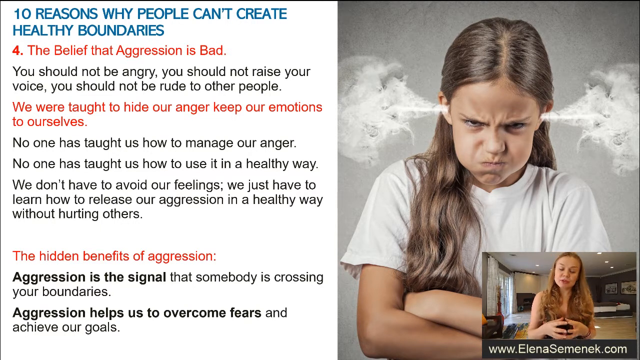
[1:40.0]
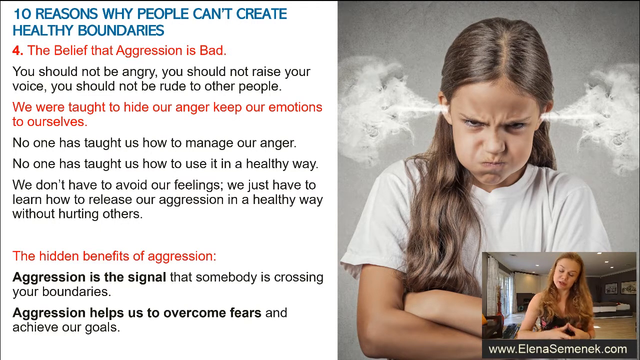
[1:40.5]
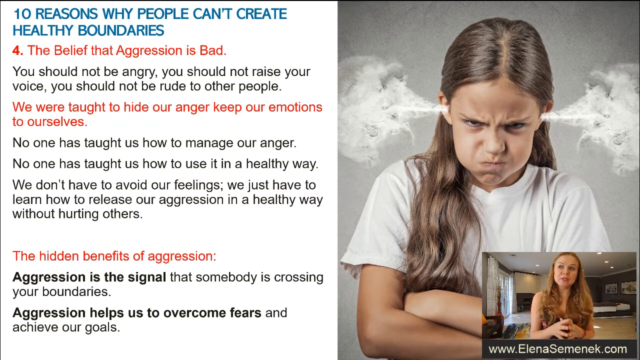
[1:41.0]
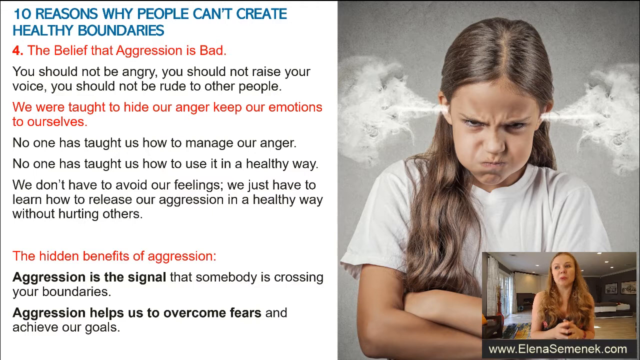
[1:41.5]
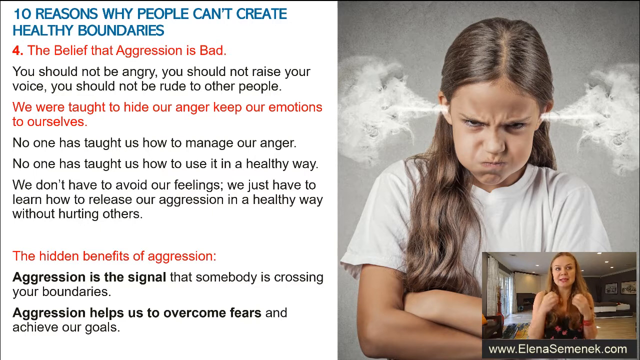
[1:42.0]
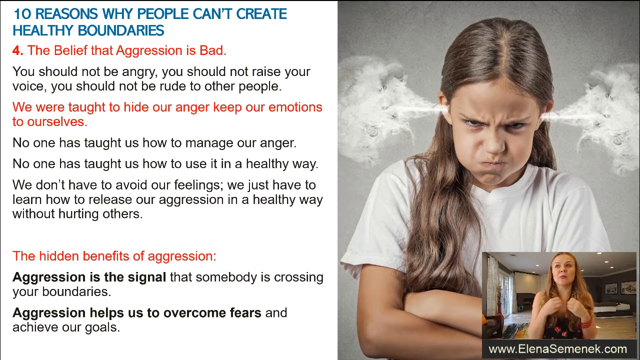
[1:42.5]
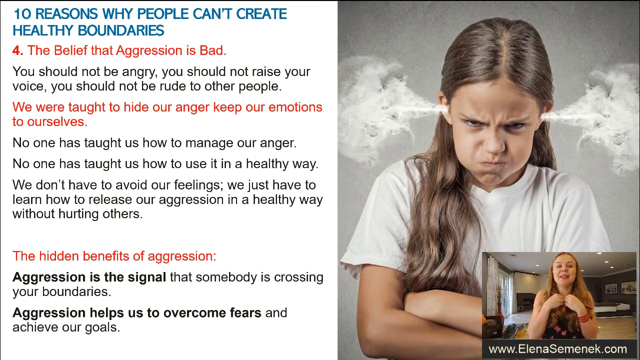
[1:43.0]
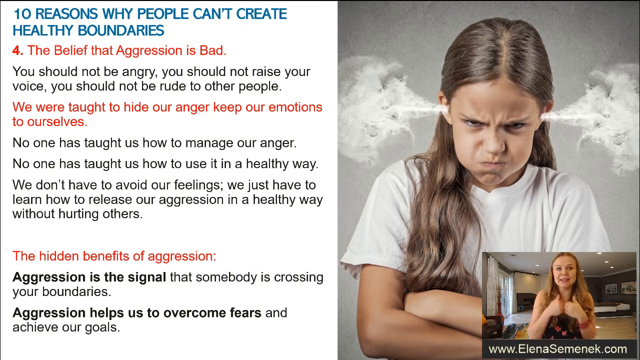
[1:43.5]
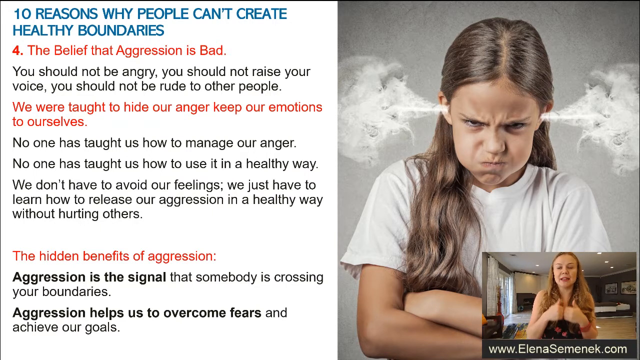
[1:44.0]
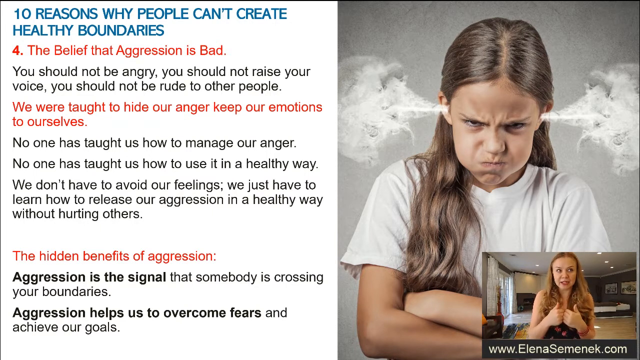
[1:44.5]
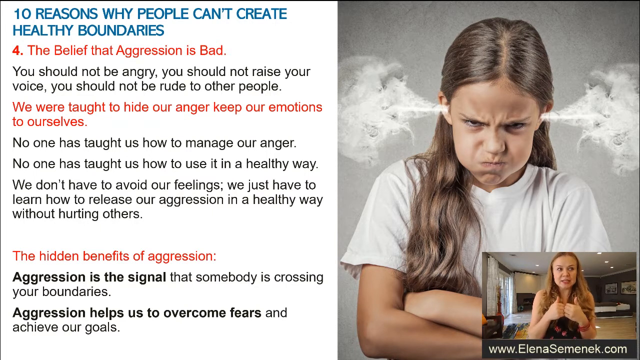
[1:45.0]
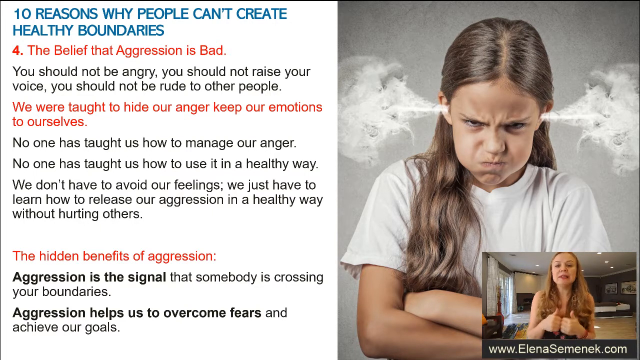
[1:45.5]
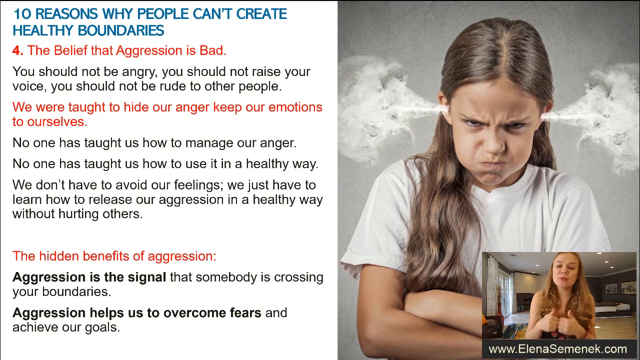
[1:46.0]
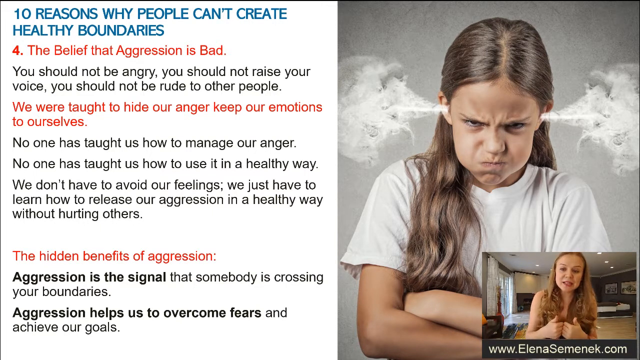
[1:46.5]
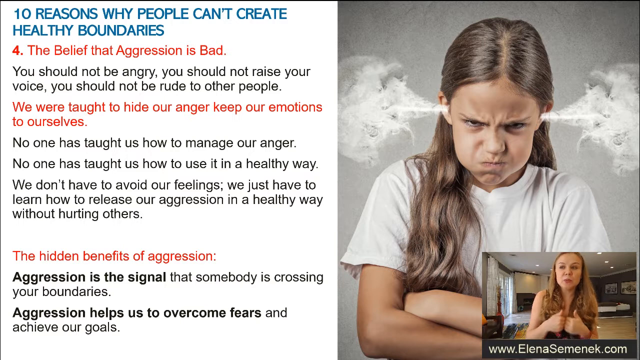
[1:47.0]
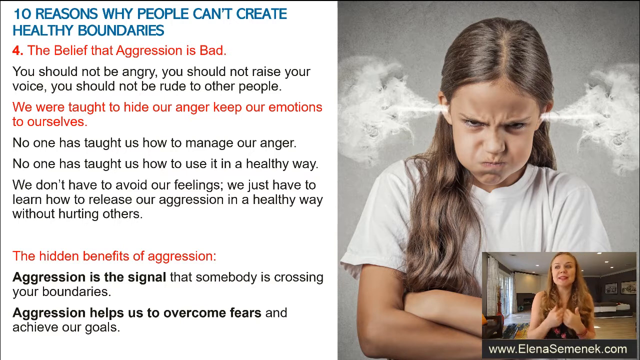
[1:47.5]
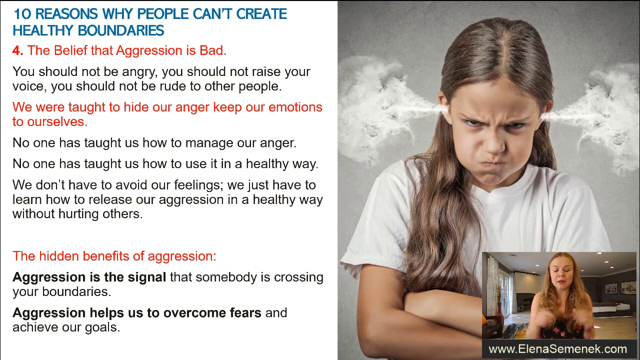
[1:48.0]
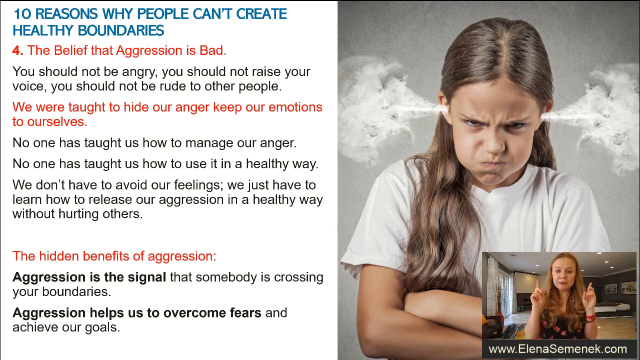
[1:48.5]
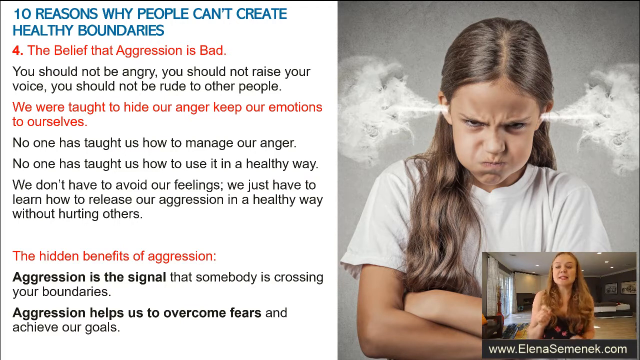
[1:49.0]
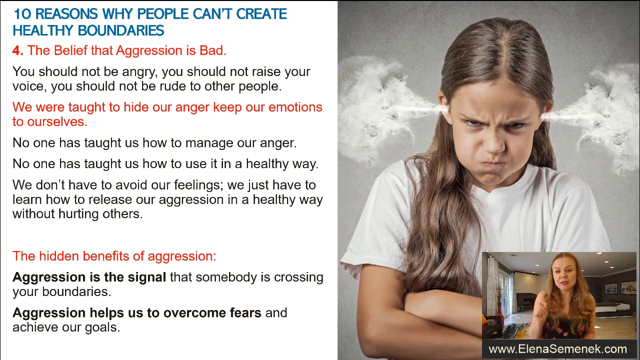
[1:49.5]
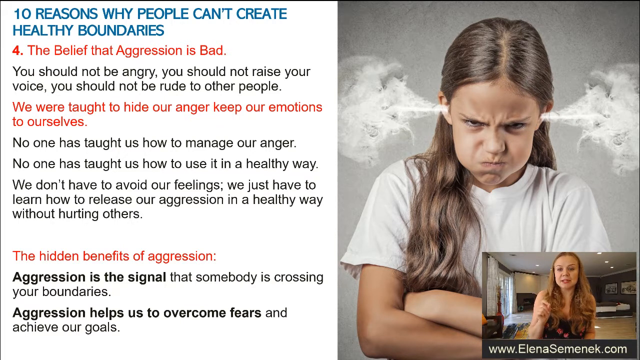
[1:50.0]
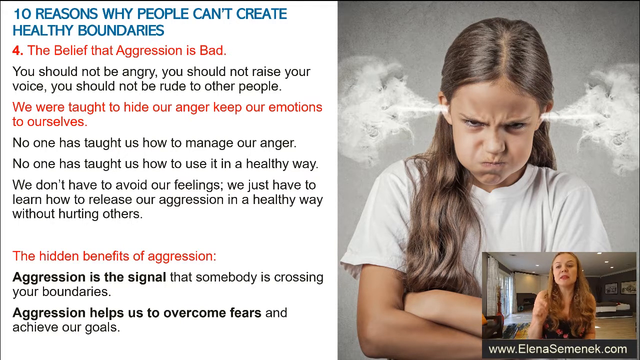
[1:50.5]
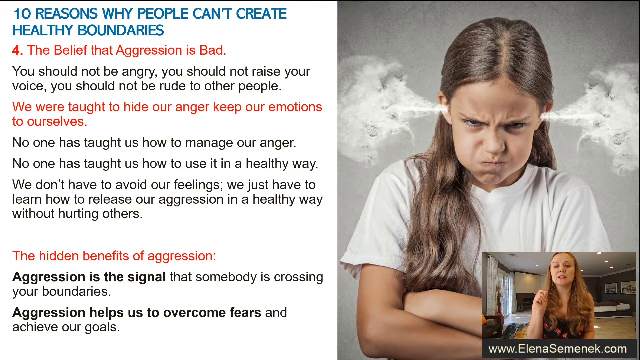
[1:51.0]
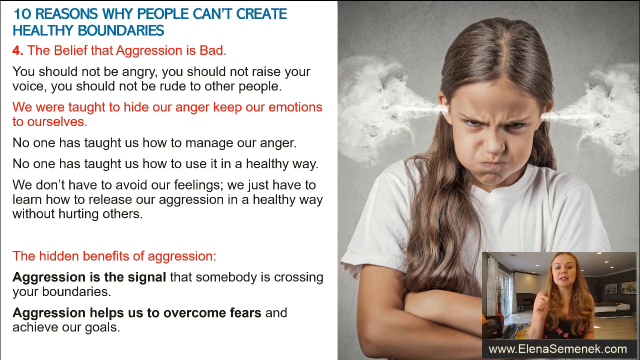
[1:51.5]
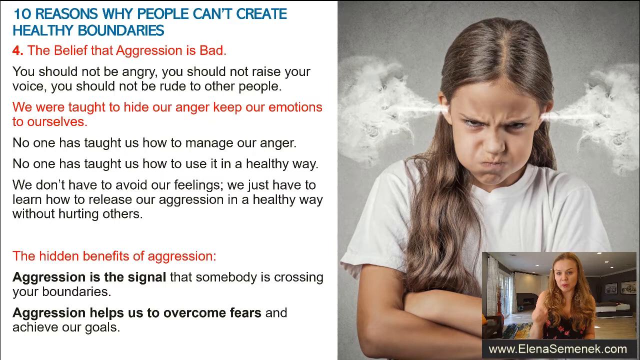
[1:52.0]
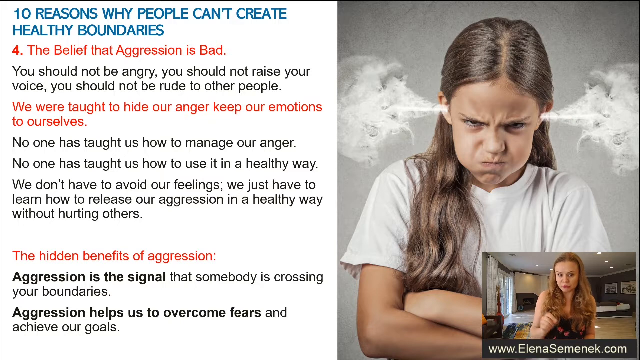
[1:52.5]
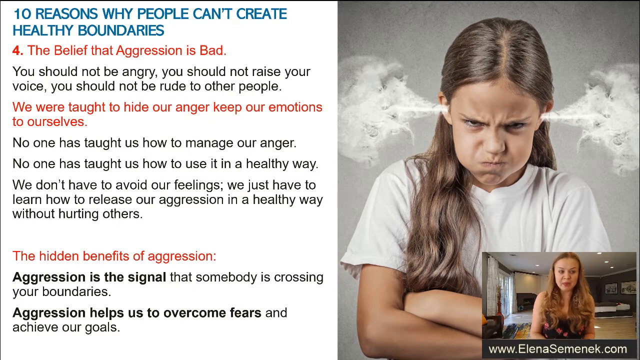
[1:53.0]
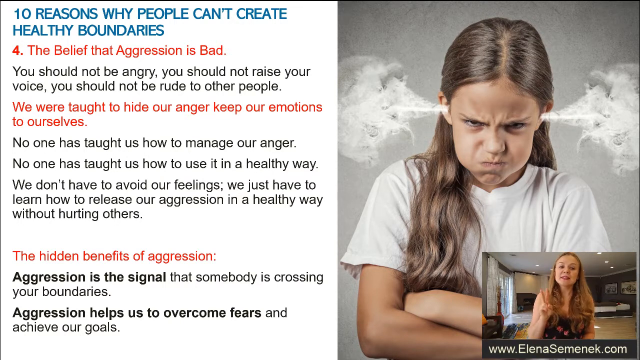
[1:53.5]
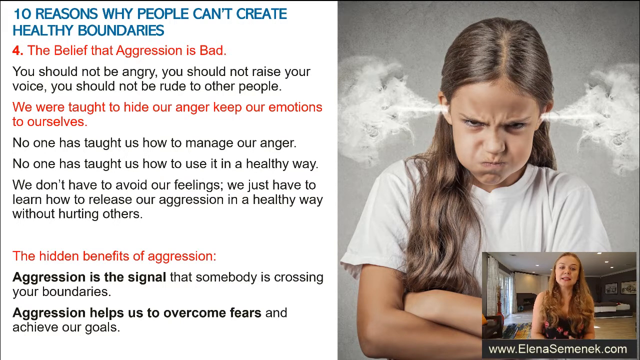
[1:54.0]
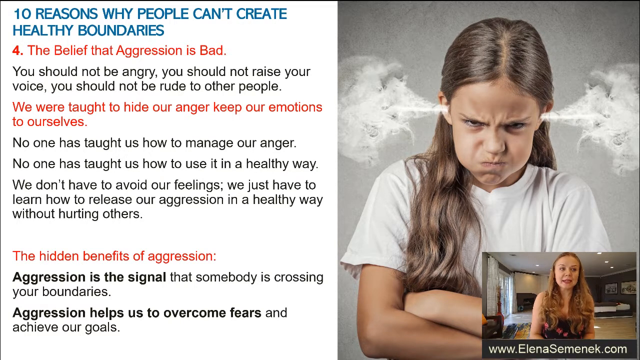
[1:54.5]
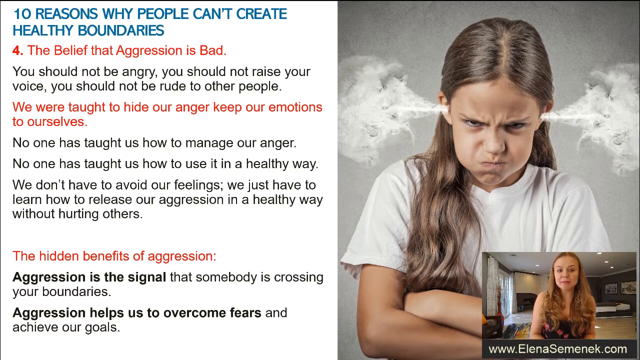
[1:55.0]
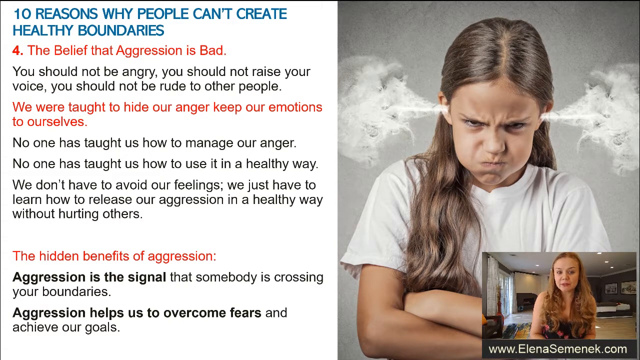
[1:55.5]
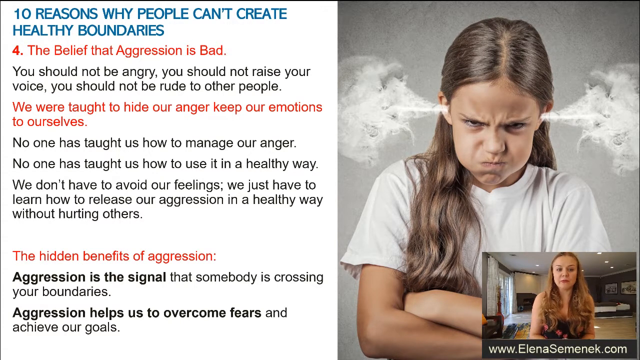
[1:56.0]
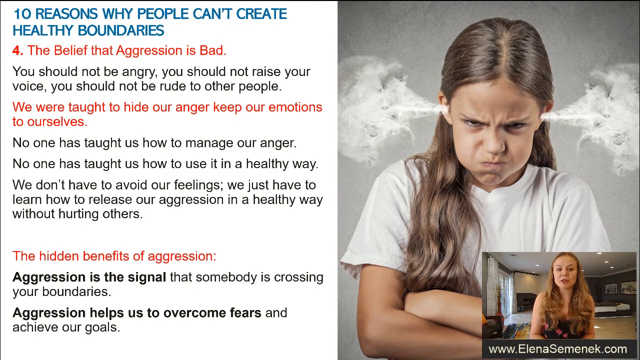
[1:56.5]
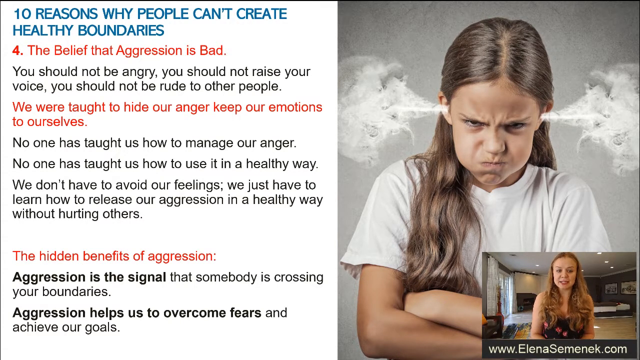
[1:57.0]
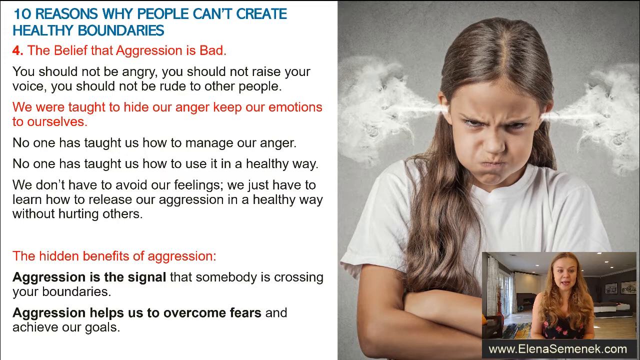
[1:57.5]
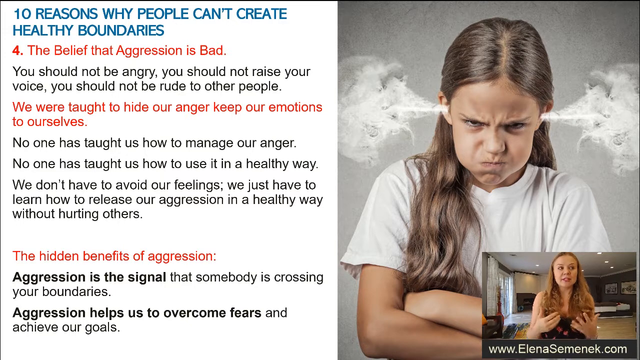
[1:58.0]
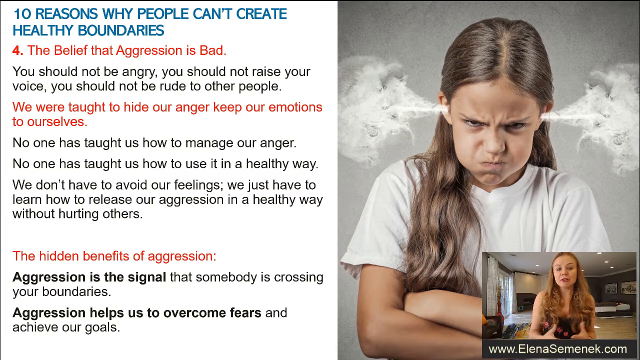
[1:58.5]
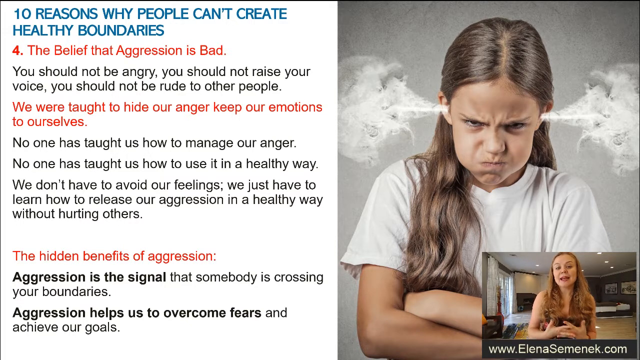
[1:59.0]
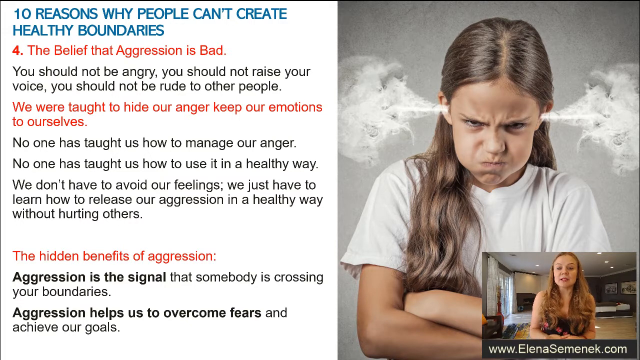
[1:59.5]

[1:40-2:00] The screen is divided into left and right sides. The left side has text about "The 10 reasons why people can't create healthy boundaries", including "4.The belief that aggression is bad", then "we were taught to hide our anger and keep our emotions to ourselves", and a third heading, "The hidden benefits of aggression". These headings are all in red font, and under each is a brief explanation. The final text on the page reads "Aggression is the signal" in bold font, followed by "that someone is crossing your boundaries". On the right is a young girl with long brown hair parted in the centre, steam coming out of her ears and an angry expression. She wears a white t-shirt. In the bottom right-hand corner is a woman with long brown hair who seems to be narrating the video. She uses her hands, which mostly move in the same rhythm as her speech, judging by her mouth movements, and she appears very confident in what she is saying.